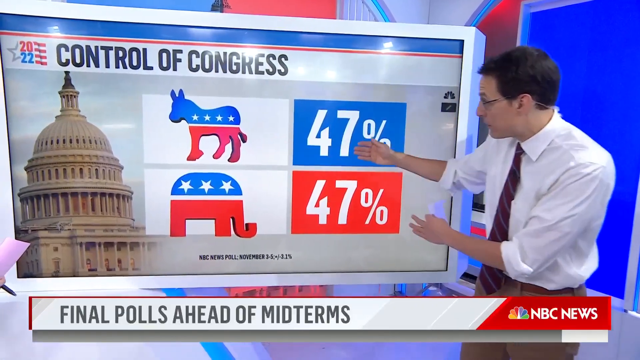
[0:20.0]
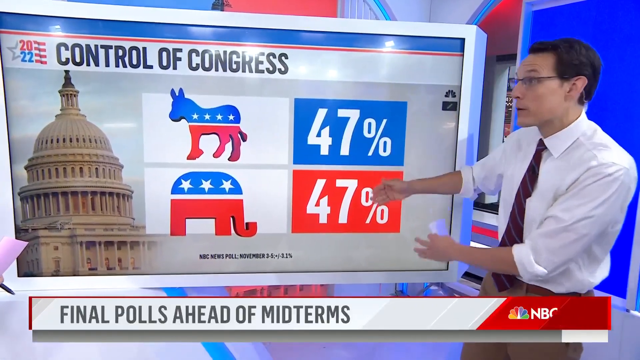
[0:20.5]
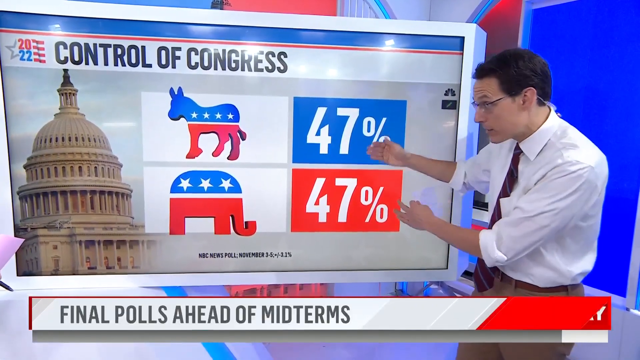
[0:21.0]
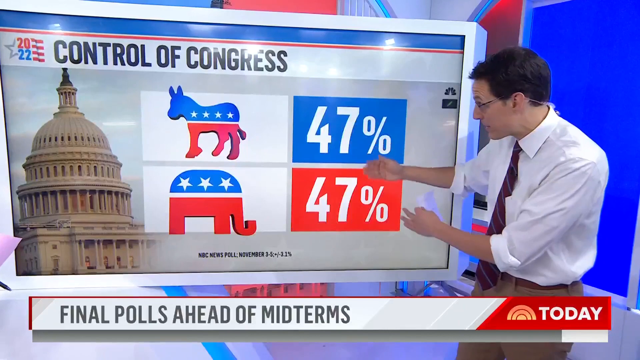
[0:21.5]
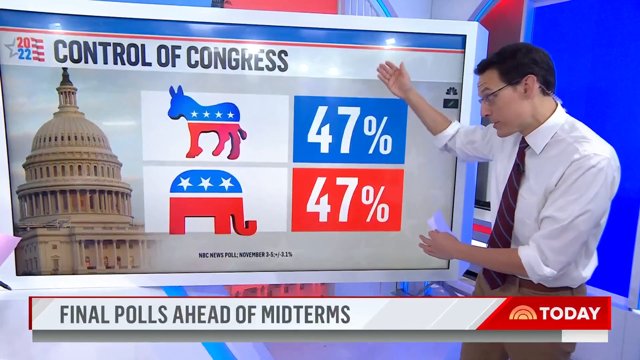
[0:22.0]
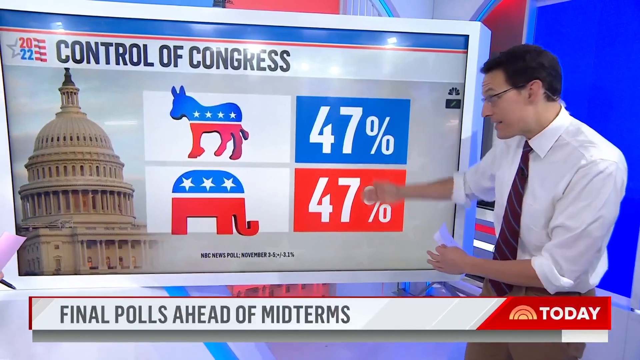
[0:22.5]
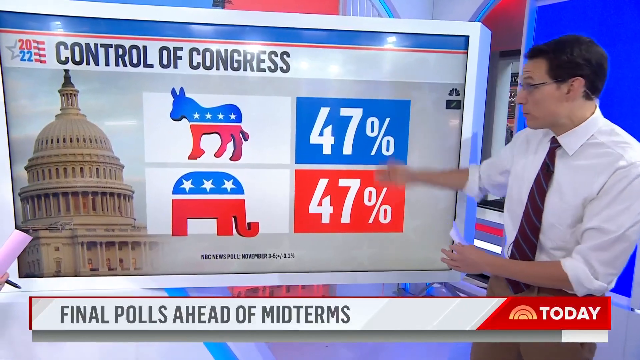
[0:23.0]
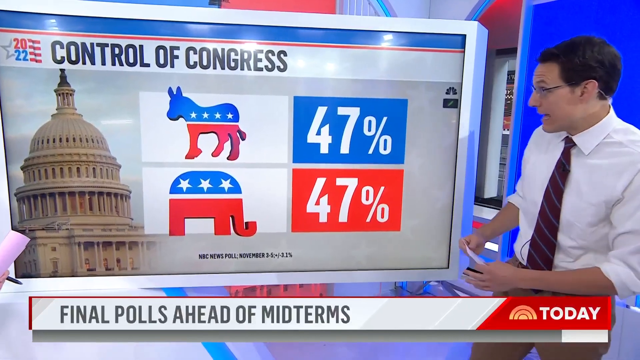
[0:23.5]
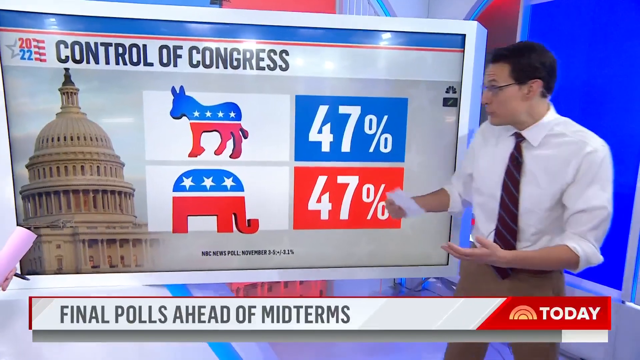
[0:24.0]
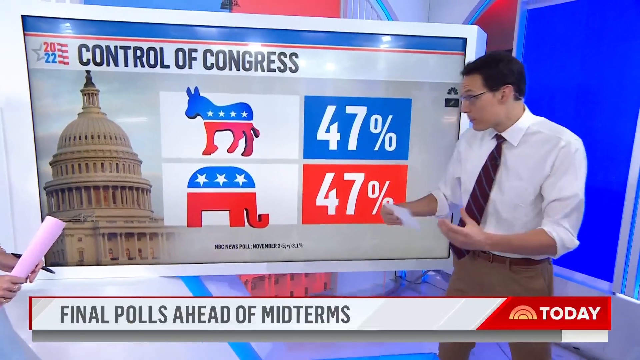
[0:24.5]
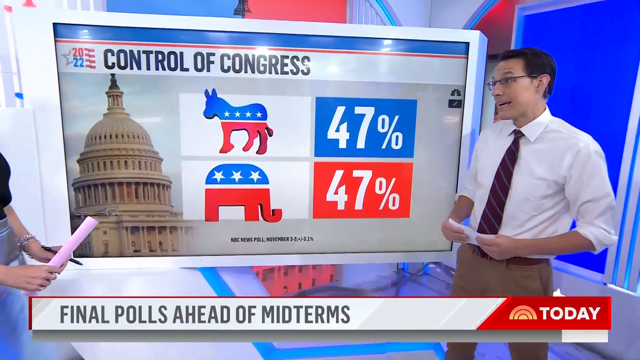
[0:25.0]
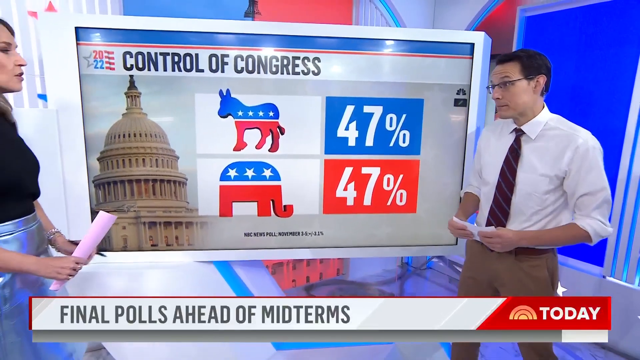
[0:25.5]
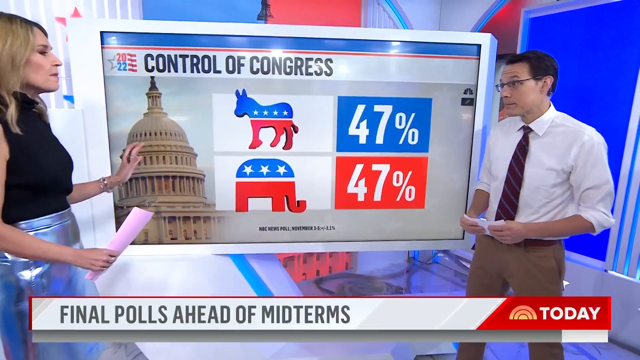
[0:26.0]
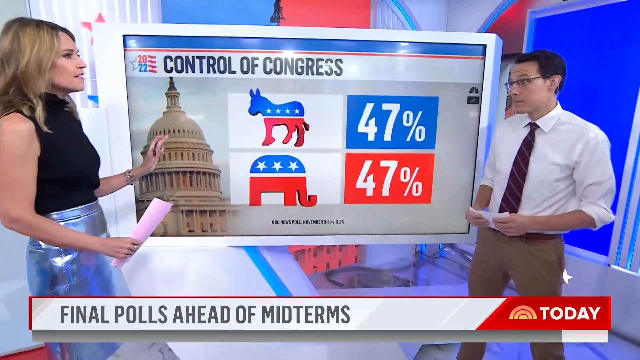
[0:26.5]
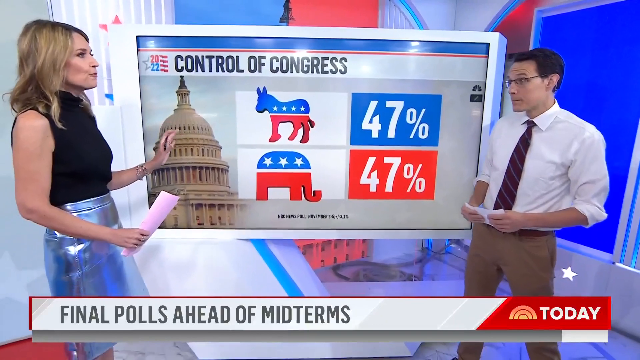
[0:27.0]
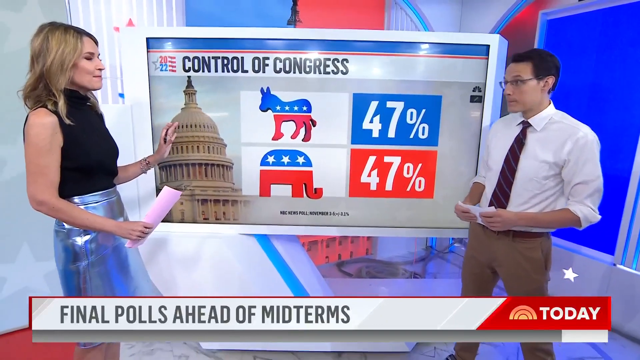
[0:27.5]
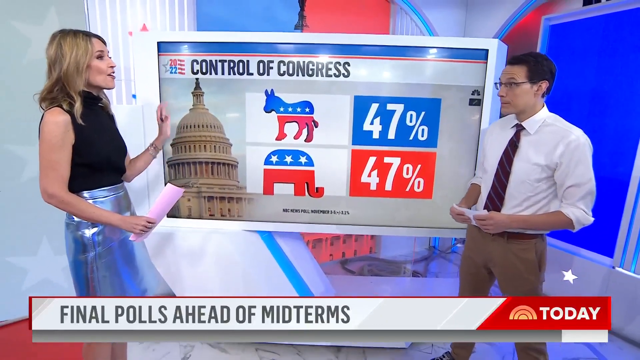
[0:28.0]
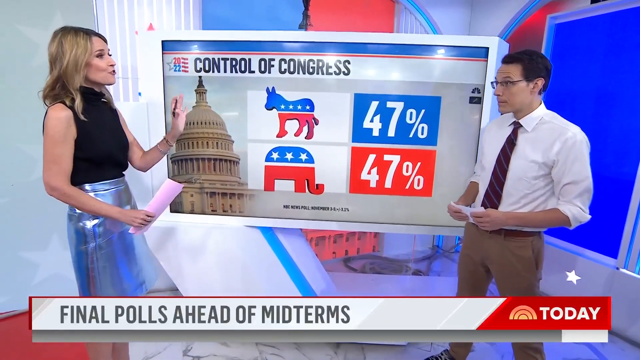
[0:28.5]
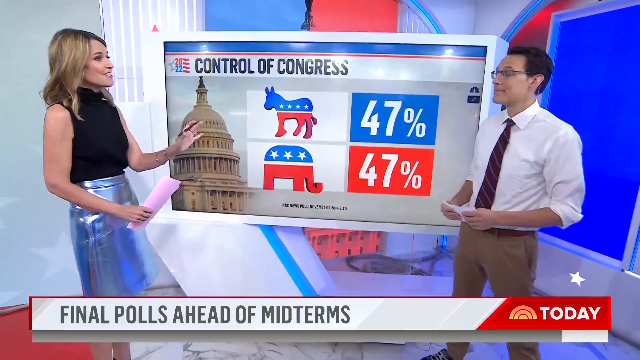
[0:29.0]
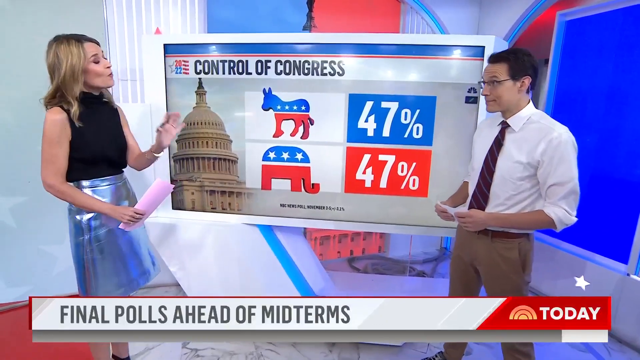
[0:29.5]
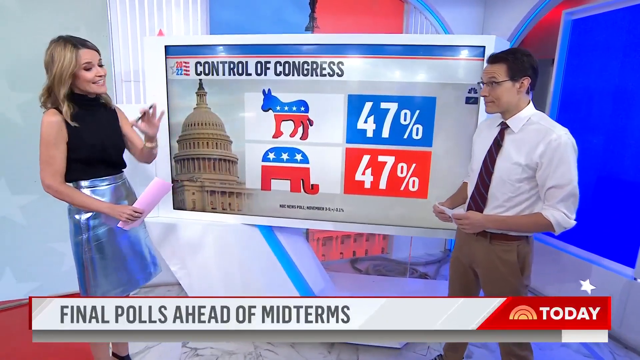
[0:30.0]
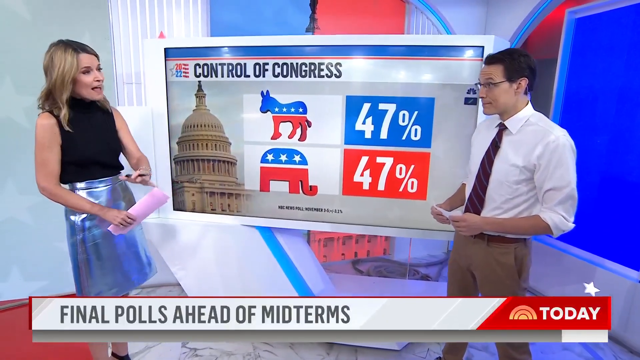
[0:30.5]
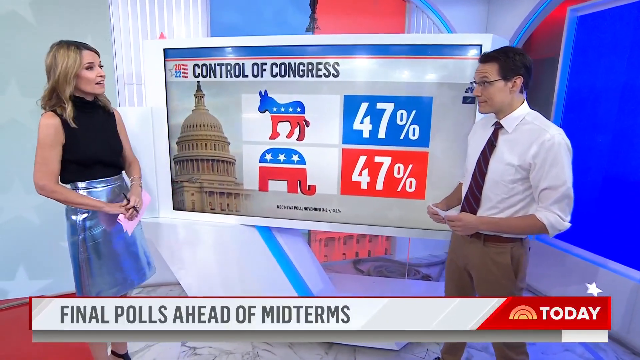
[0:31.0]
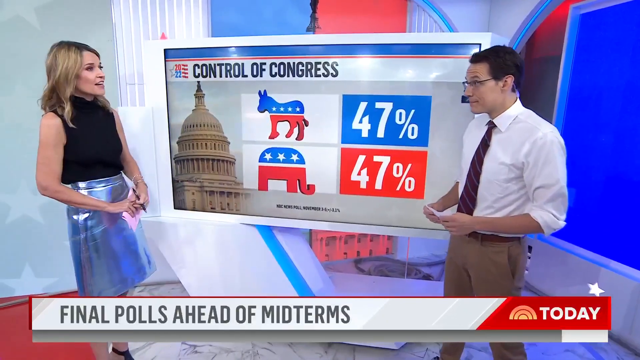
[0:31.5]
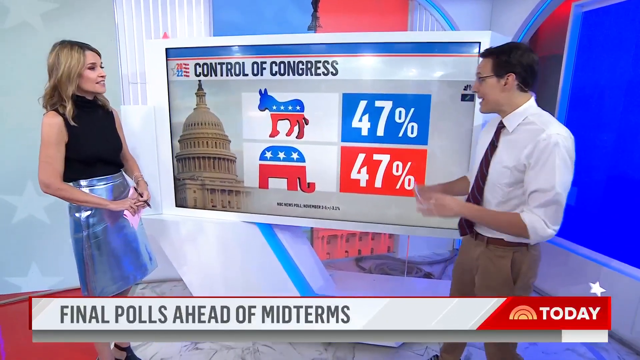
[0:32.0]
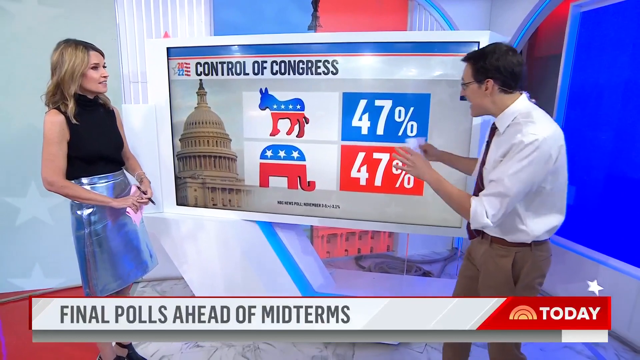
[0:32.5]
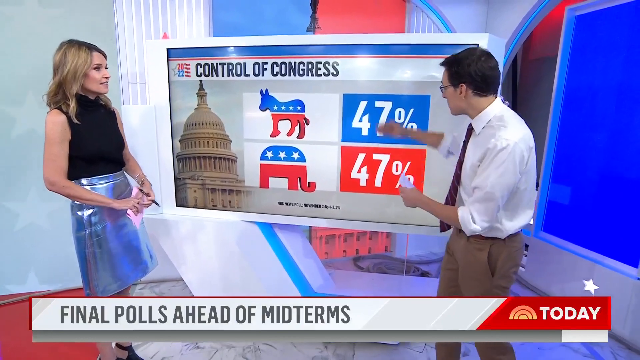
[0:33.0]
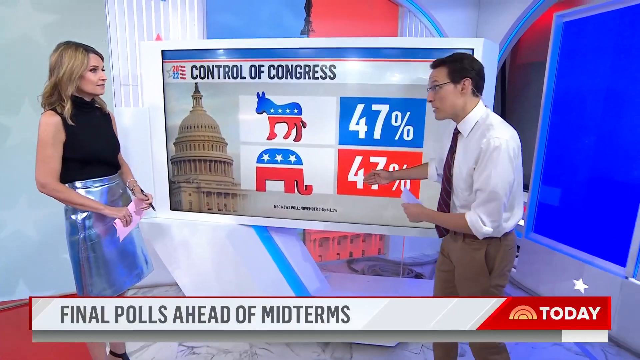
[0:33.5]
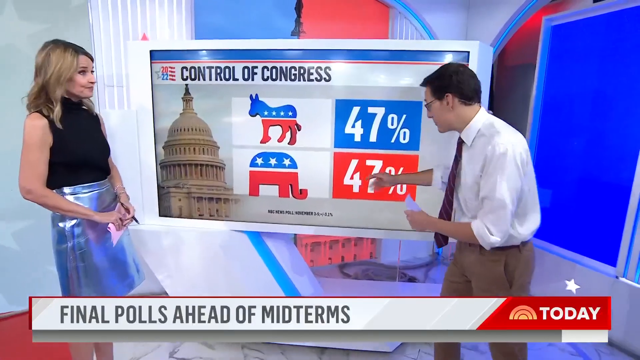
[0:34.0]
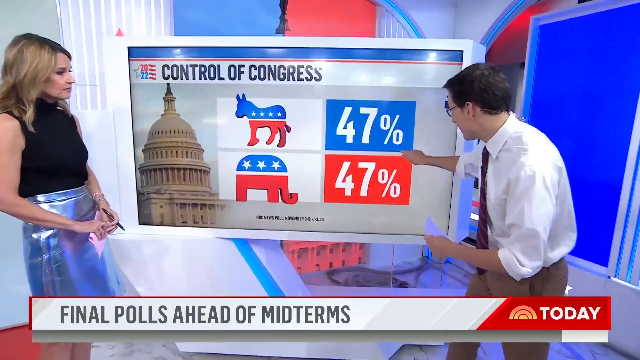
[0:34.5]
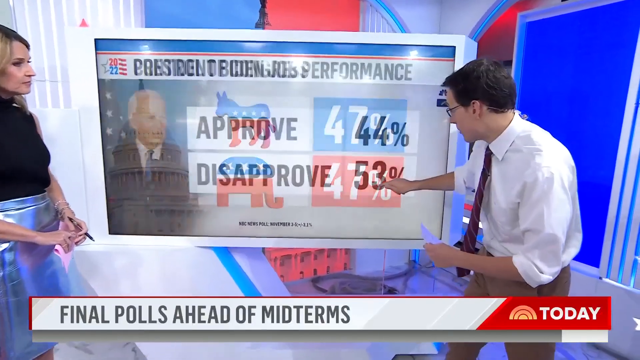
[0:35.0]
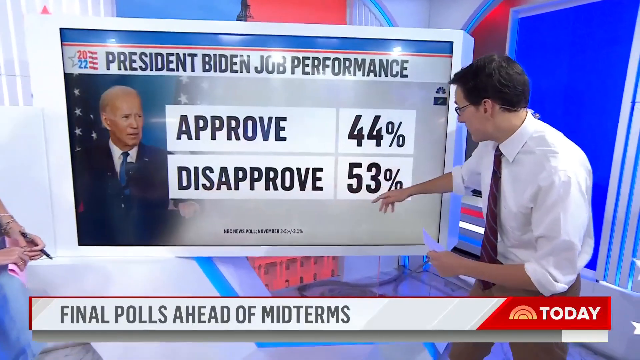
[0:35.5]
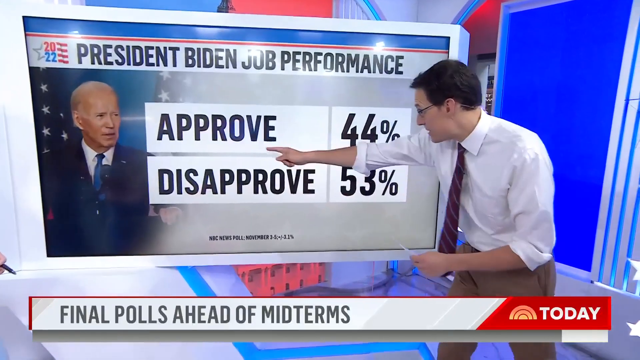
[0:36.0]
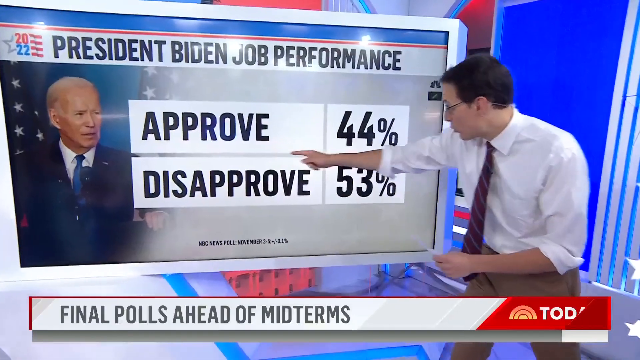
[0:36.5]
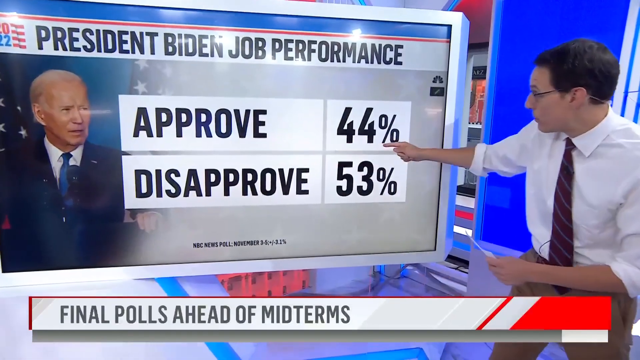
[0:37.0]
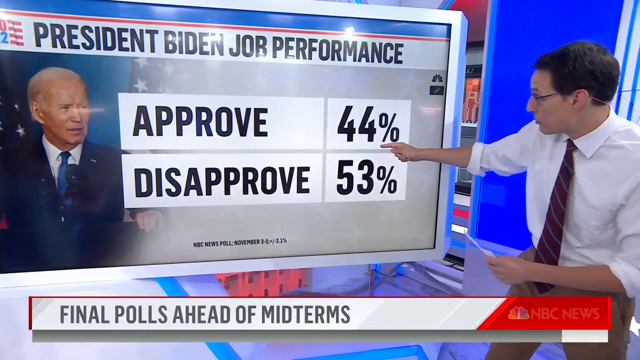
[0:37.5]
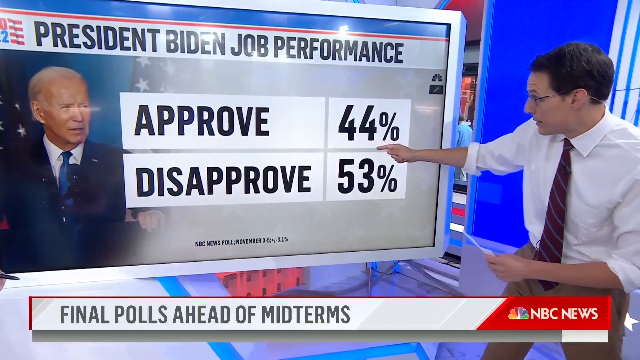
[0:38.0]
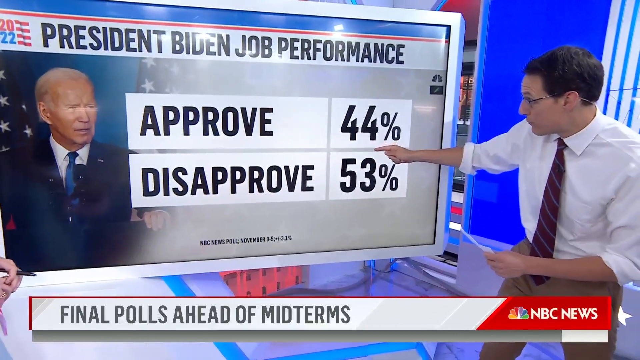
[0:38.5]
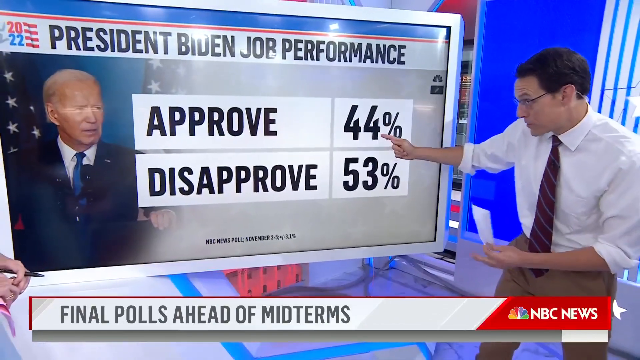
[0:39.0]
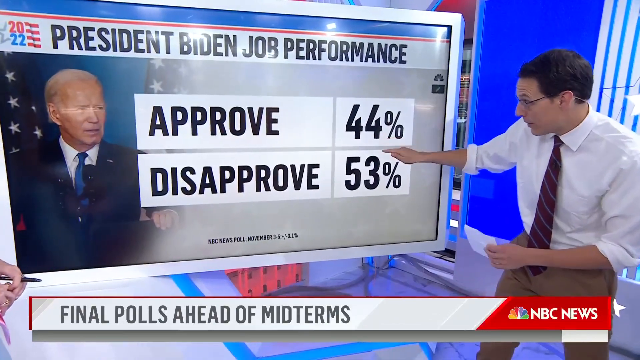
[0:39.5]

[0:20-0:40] The man stands in front of the screen, pointing at and gesturing toward it as he talks; it shows control of Congress evenly divided between the Republicans and the Democrats. He holds some cards in his hand. The woman then speaks energetically to the man, holding paper in her hands. The man speaks again and points toward the screen. Another screen appears reading "Joe Biden job performance," with "approved 44%" and "disapproved 53%," and a picture of Joe Biden in the back. The man is still pointing at the screen. The colors are bright and the video is high quality.